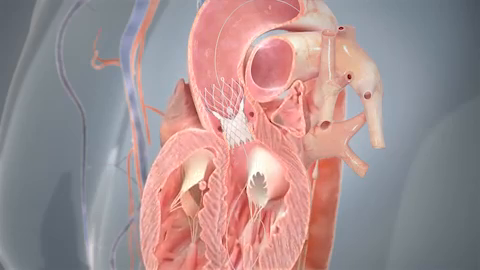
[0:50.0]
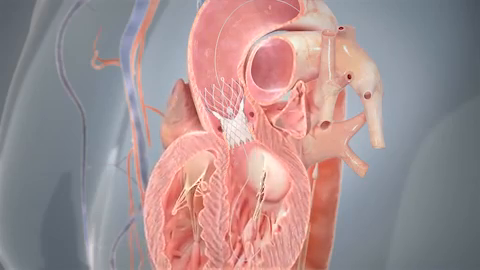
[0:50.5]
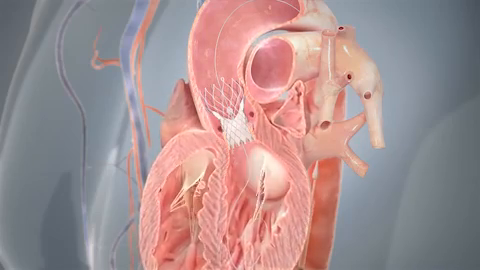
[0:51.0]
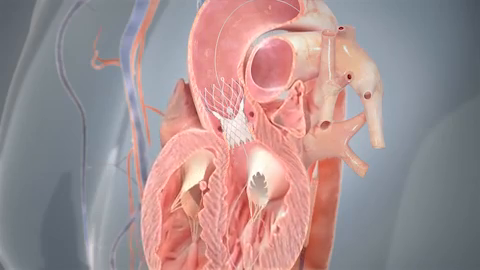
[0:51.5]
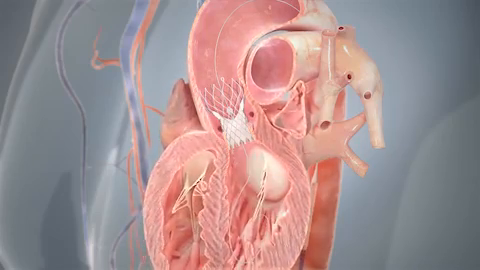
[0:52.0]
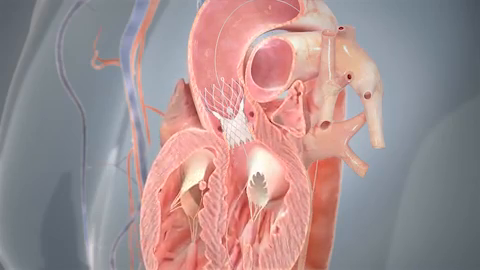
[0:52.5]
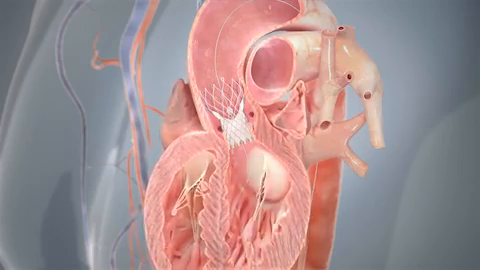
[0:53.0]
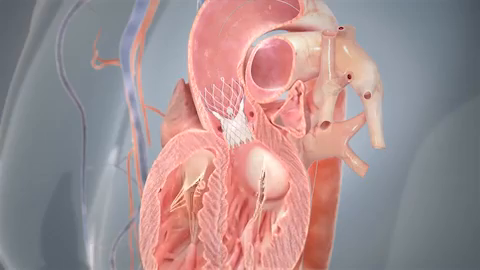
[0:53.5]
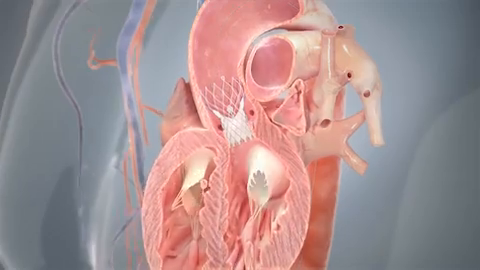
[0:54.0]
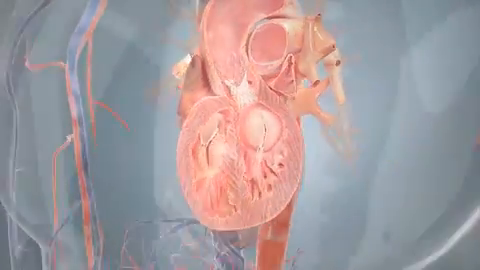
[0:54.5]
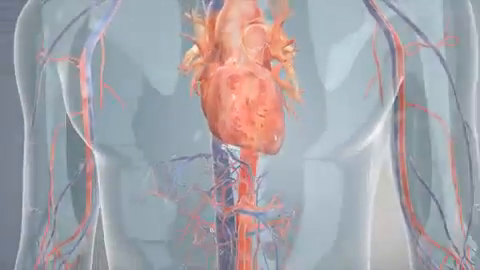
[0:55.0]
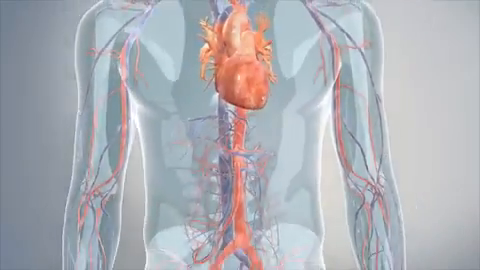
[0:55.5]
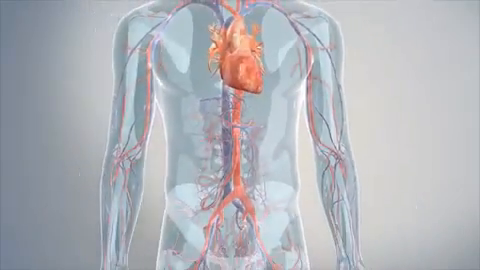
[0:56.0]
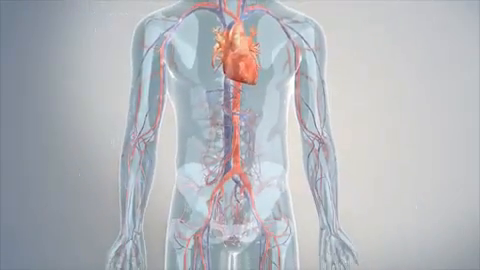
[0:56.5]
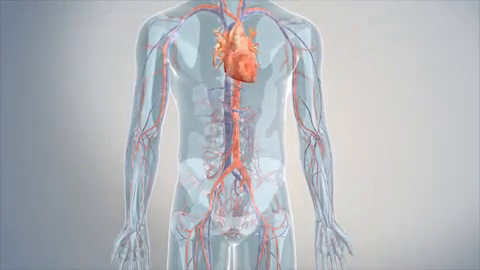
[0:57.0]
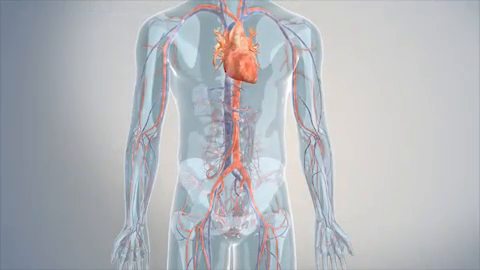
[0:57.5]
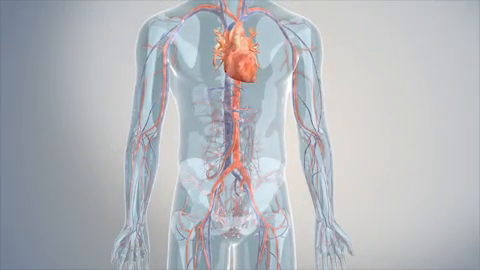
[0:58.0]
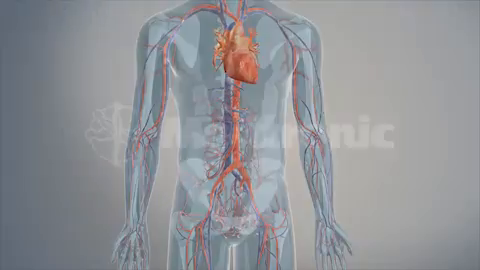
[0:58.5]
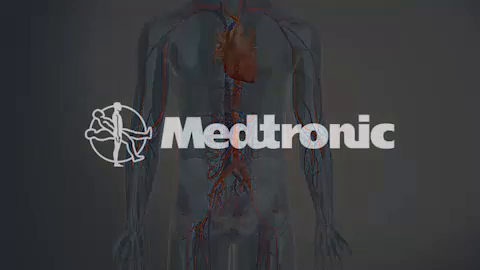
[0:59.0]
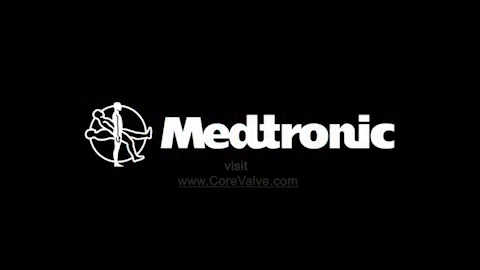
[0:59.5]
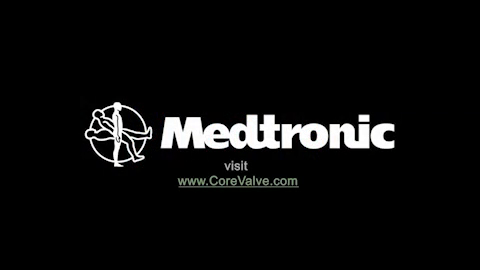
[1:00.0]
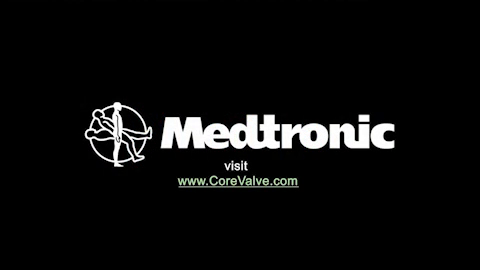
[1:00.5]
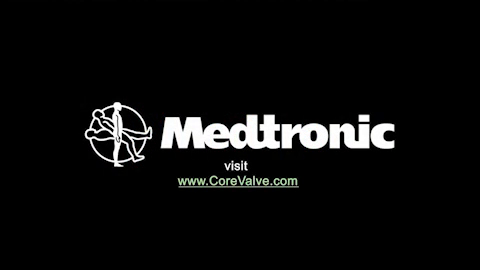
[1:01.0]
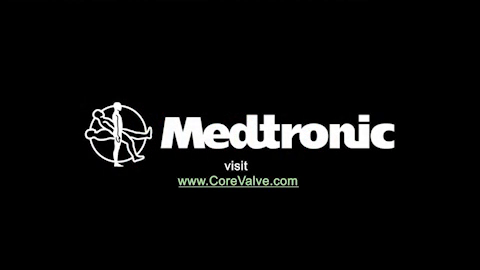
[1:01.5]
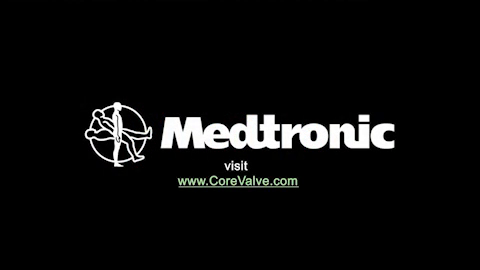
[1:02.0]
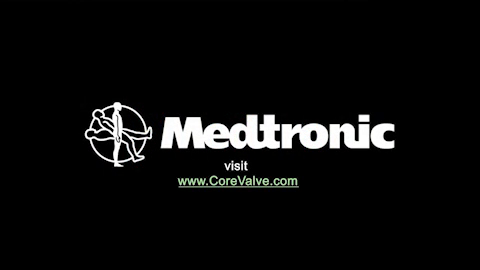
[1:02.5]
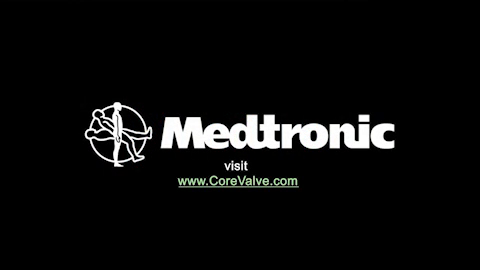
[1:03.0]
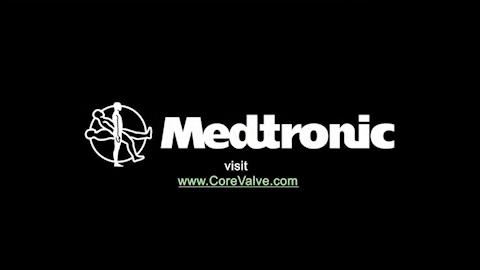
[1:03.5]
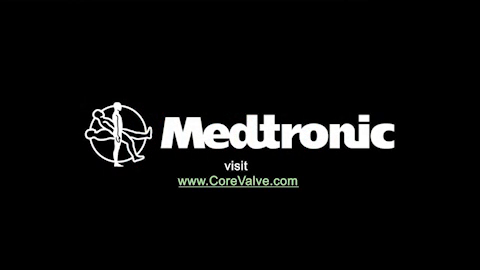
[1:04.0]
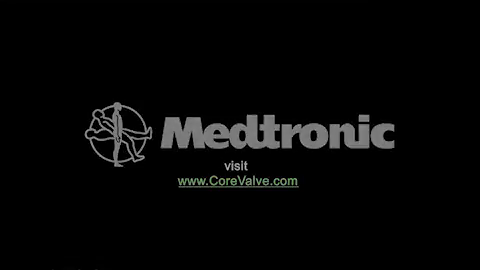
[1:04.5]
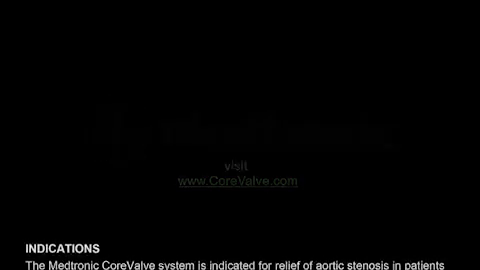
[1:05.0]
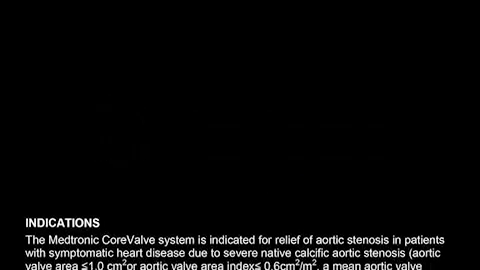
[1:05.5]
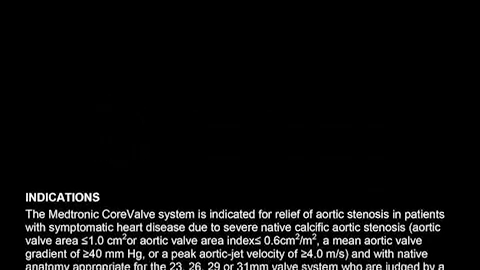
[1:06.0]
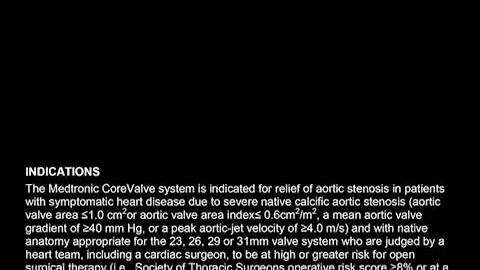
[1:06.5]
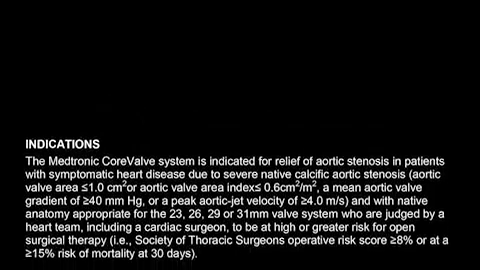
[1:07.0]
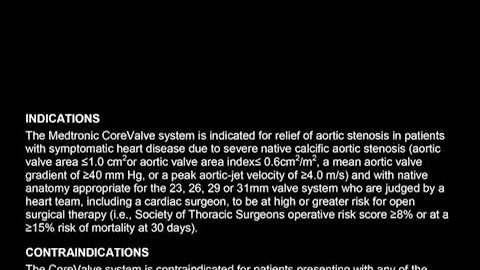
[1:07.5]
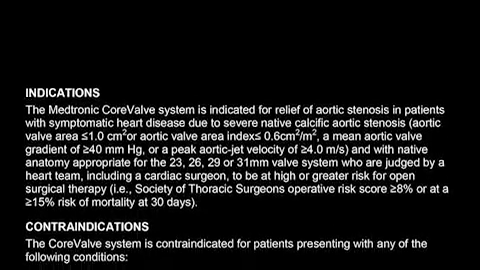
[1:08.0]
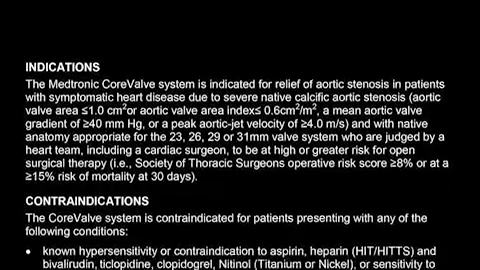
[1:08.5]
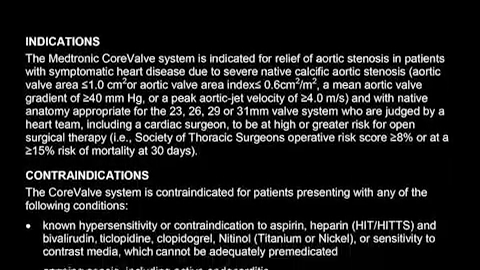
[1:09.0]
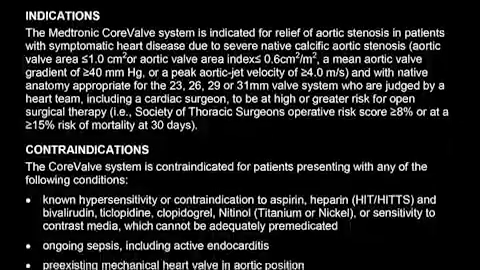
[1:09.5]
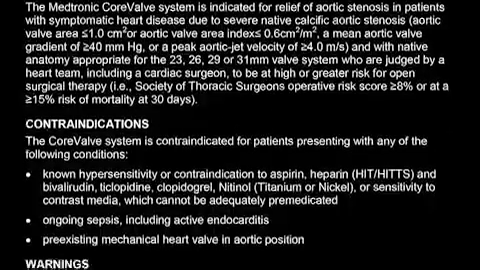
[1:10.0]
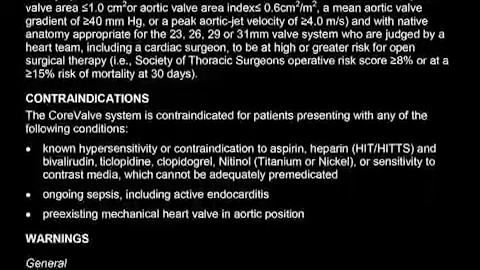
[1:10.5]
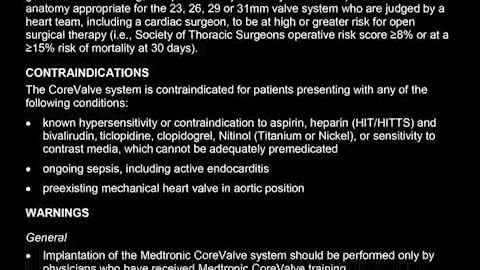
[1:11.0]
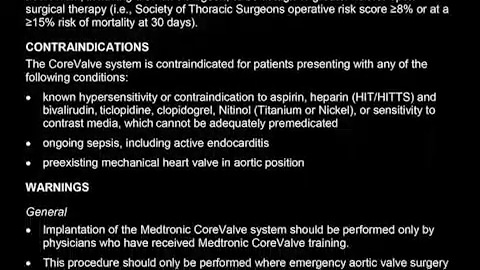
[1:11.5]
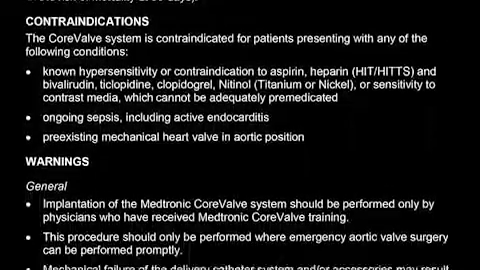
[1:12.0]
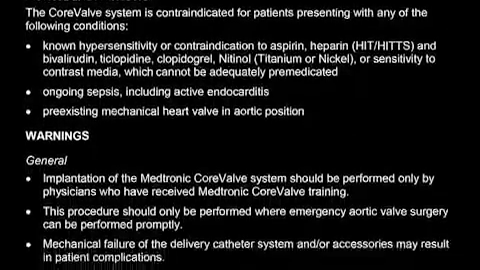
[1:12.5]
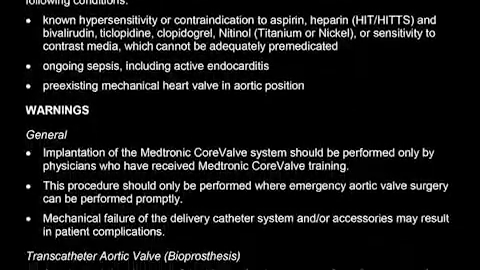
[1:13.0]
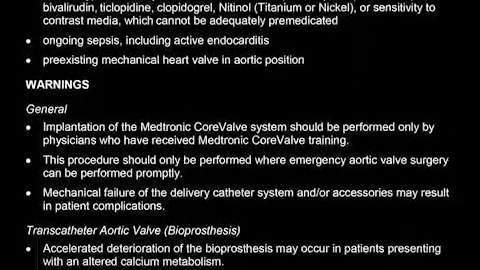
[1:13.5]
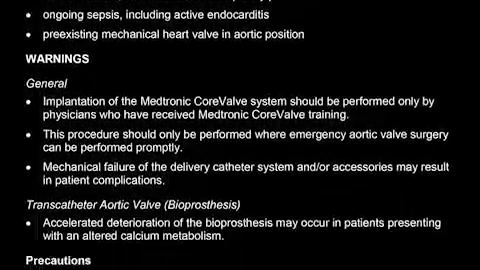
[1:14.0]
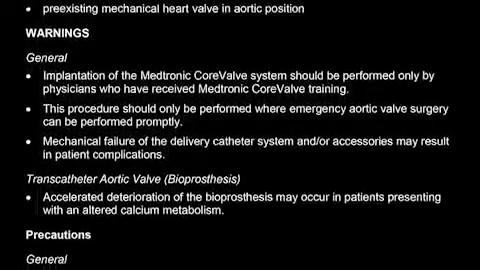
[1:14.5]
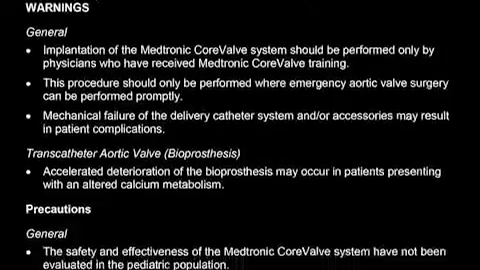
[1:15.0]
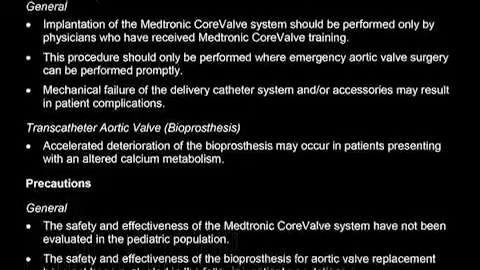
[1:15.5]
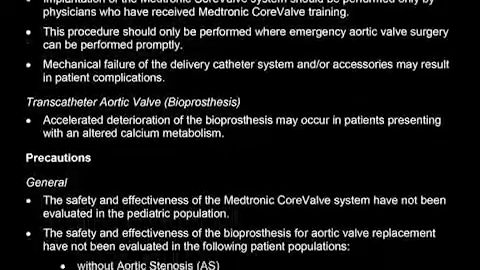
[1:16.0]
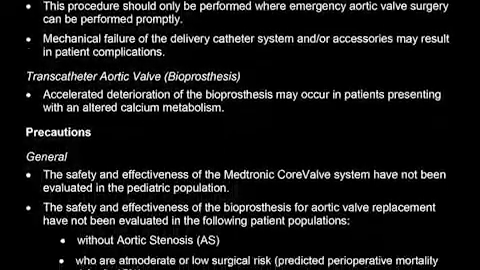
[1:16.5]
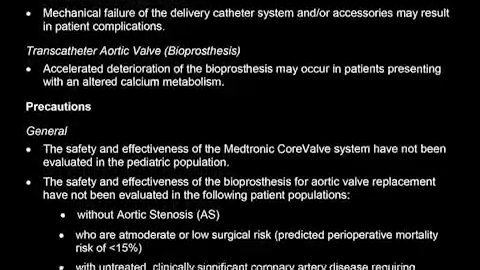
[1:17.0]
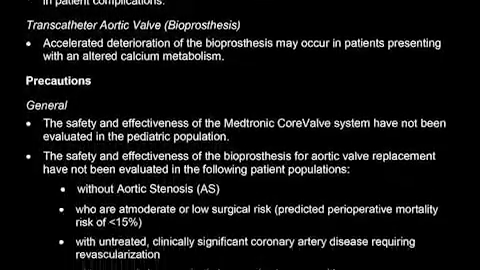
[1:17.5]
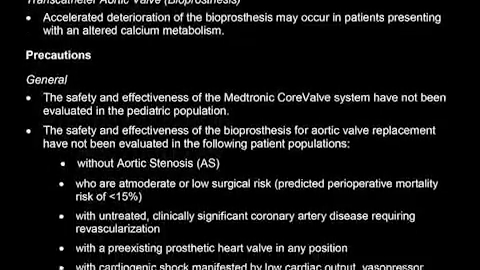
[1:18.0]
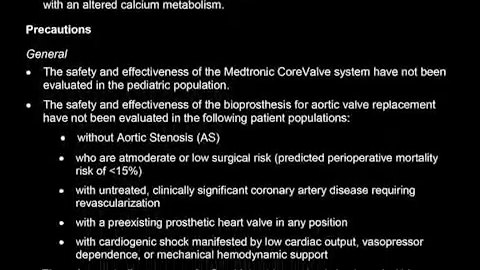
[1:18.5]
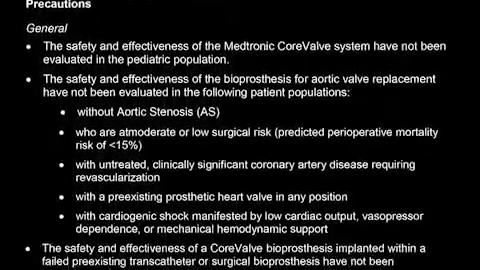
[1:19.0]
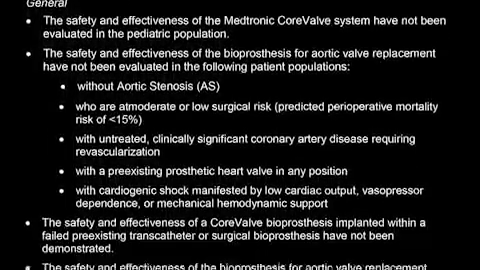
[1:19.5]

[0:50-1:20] A kind of digitally produced heart is shown from the side, beating inside someone's chest. The text "Medtronic" and "visit www.corevalve.com" appears with an emblem on the left side. The emblem shows a person who is maybe lying flat, then sitting up, then standing up, so seen from the side it almost looks like a person walking or a person with three legs. The whole background is black, the emblem is lit up in white, the words "Medtronic" and "visit" are in white, and the website is in a light yellow color.